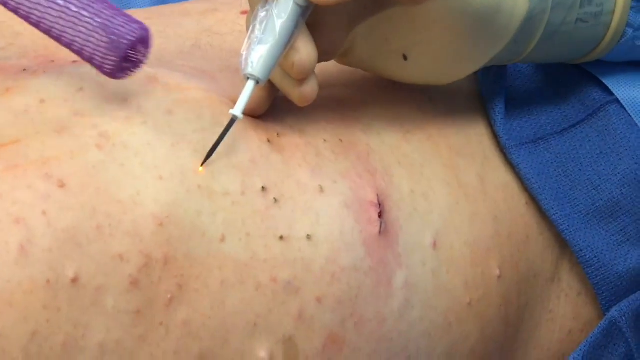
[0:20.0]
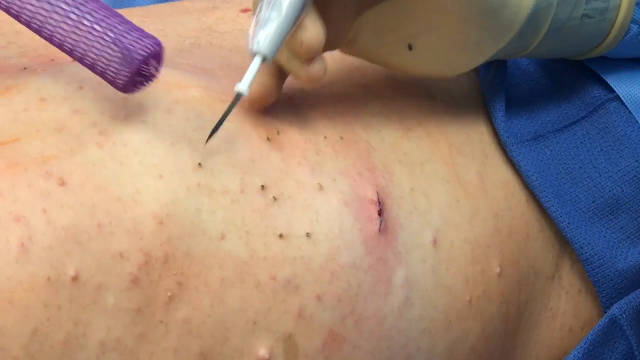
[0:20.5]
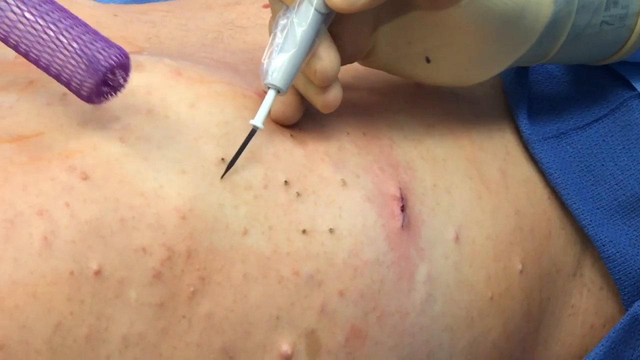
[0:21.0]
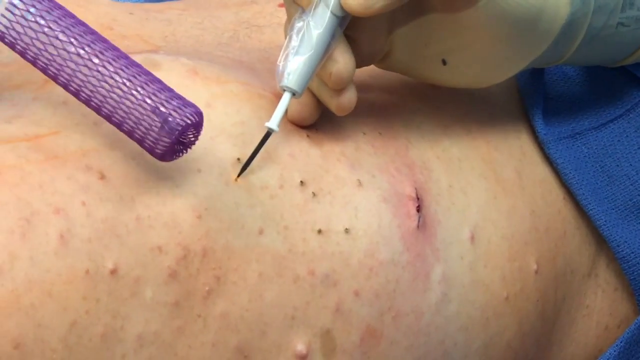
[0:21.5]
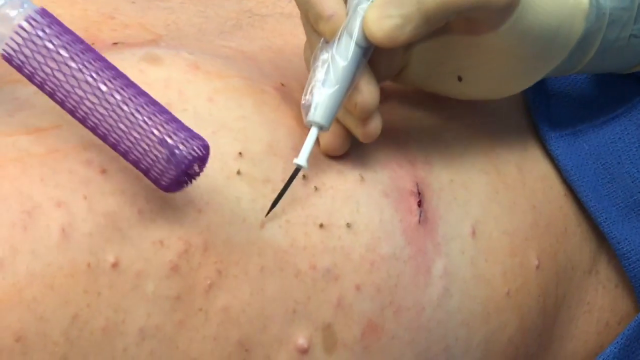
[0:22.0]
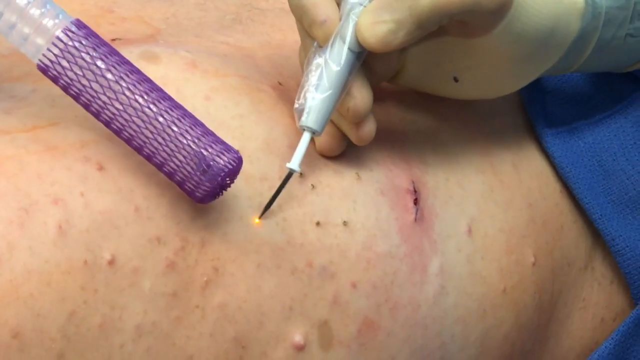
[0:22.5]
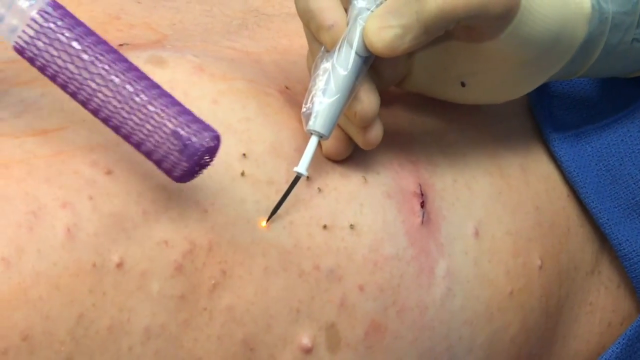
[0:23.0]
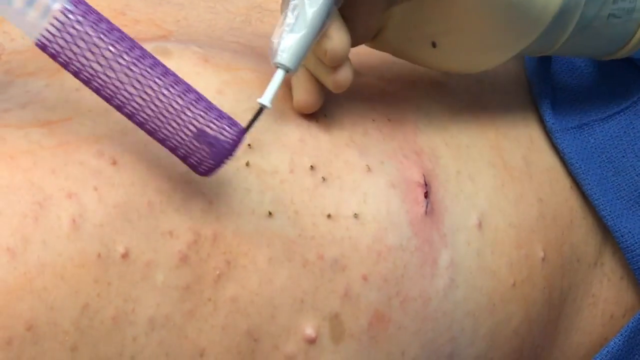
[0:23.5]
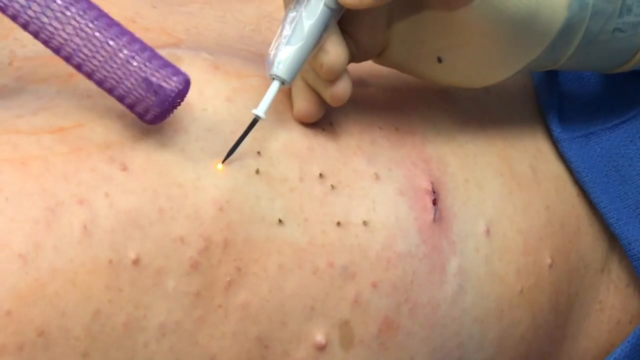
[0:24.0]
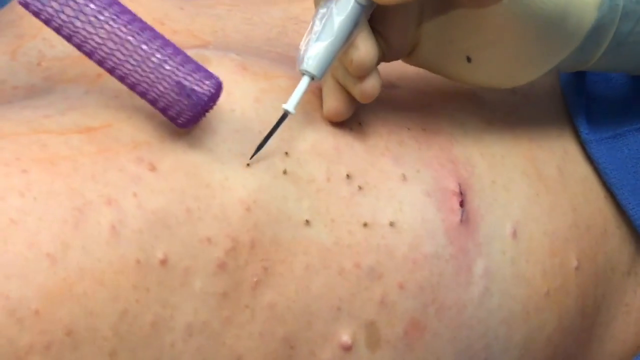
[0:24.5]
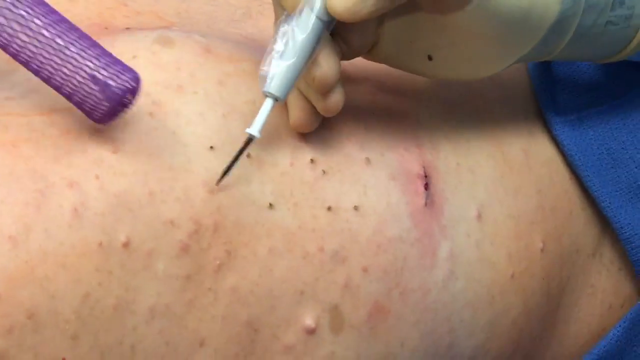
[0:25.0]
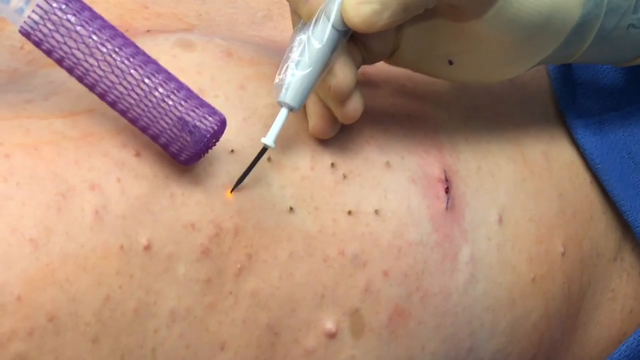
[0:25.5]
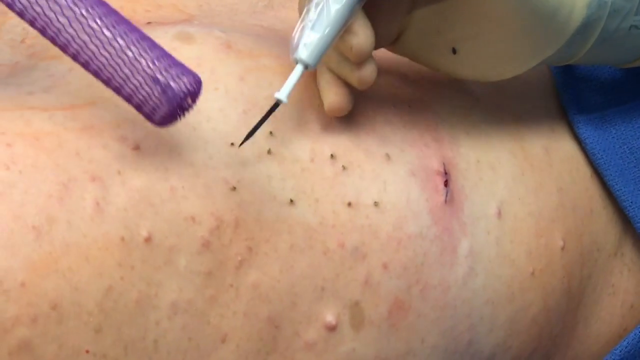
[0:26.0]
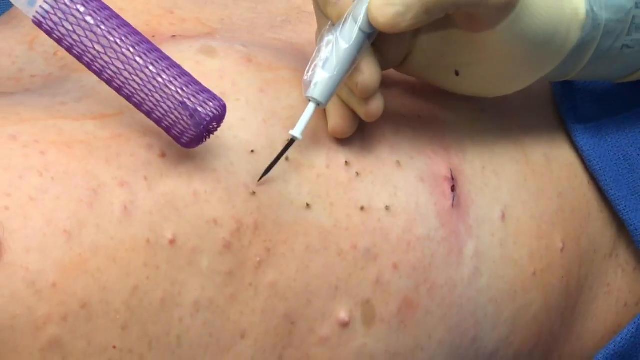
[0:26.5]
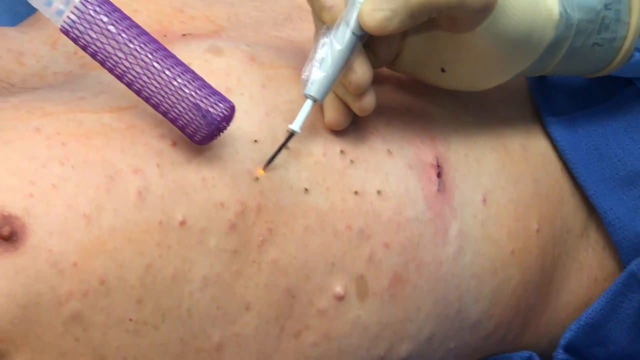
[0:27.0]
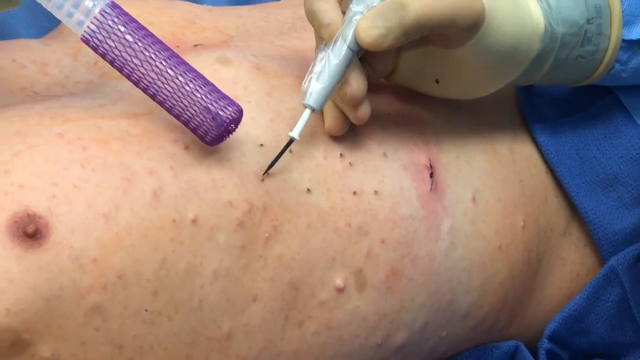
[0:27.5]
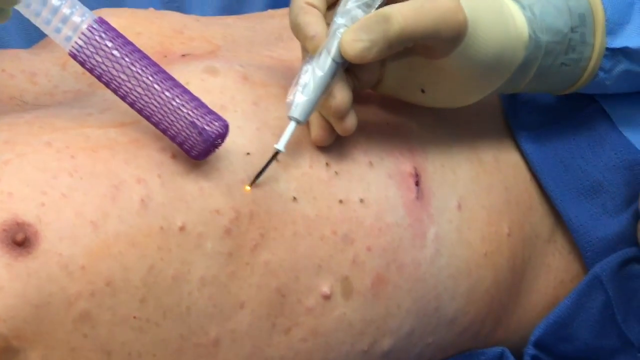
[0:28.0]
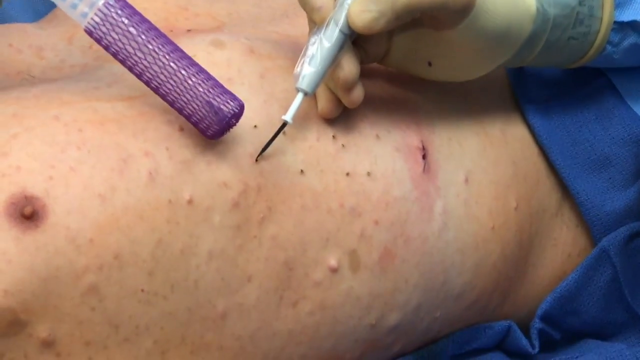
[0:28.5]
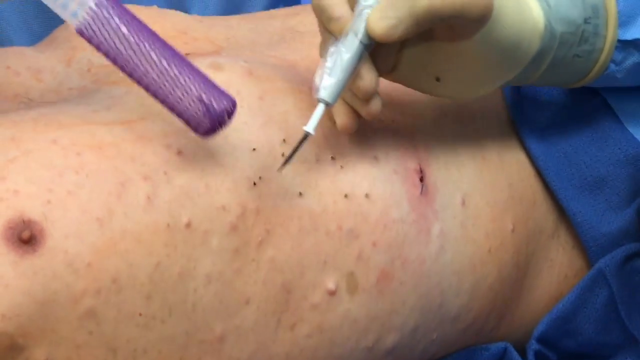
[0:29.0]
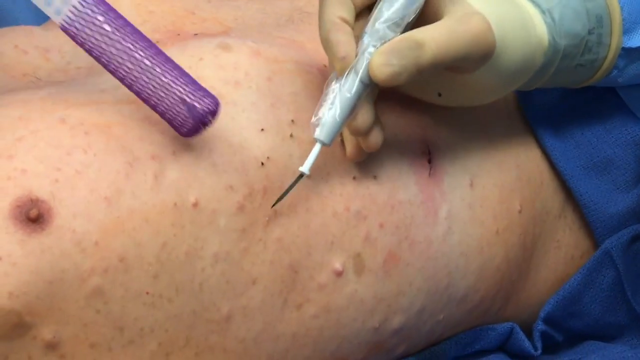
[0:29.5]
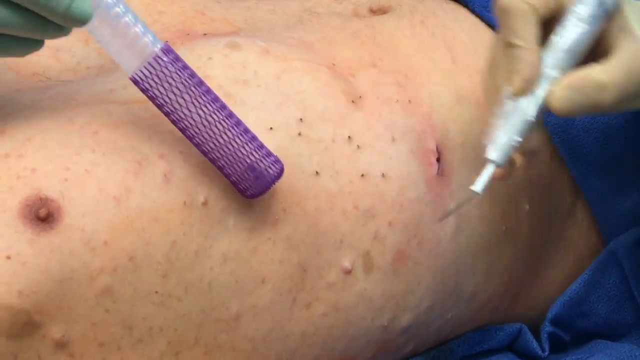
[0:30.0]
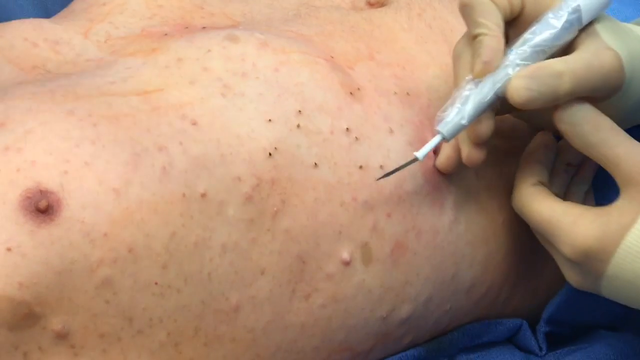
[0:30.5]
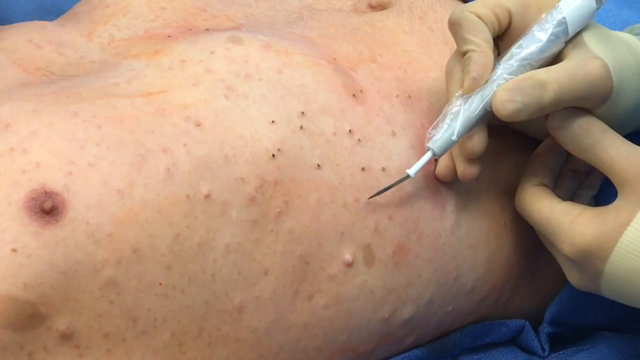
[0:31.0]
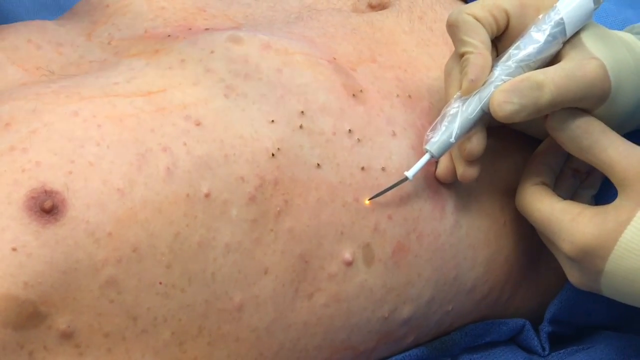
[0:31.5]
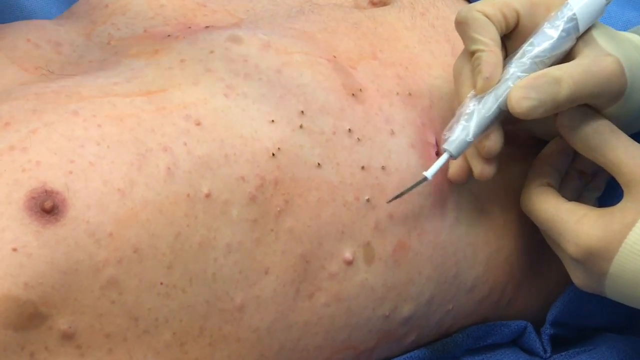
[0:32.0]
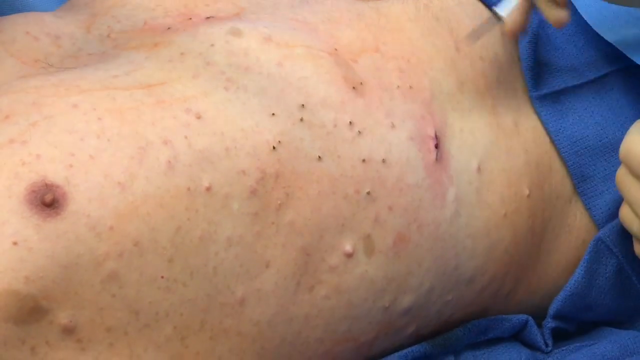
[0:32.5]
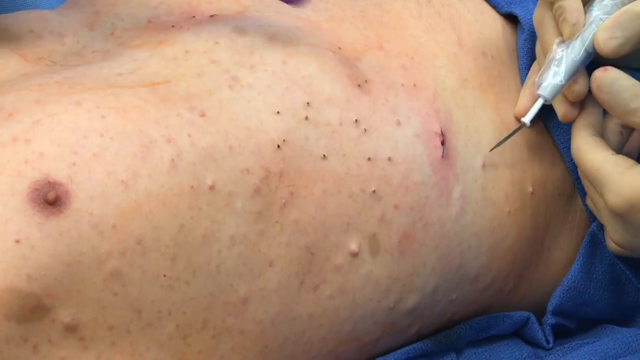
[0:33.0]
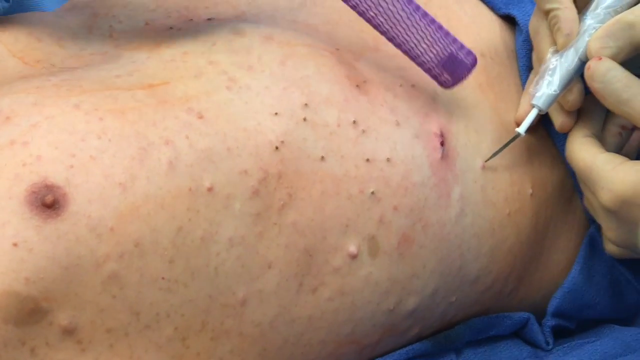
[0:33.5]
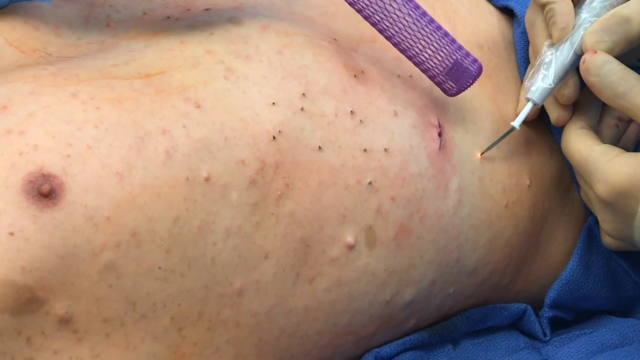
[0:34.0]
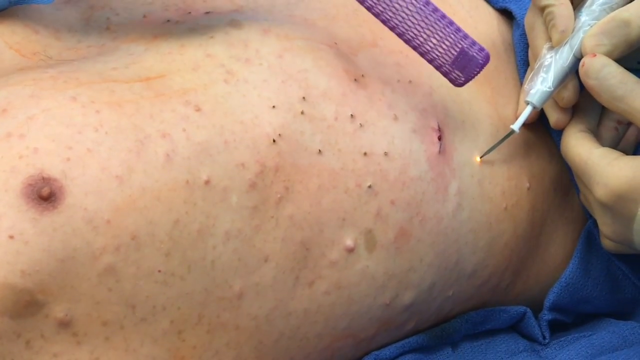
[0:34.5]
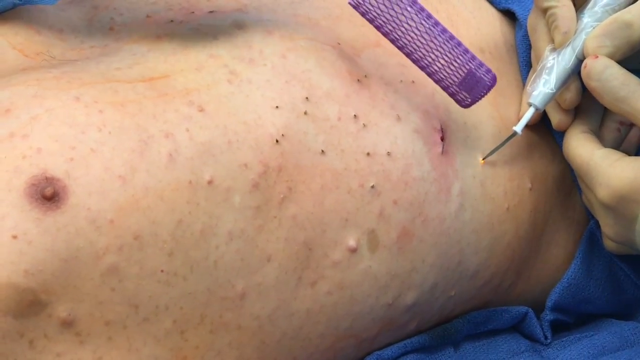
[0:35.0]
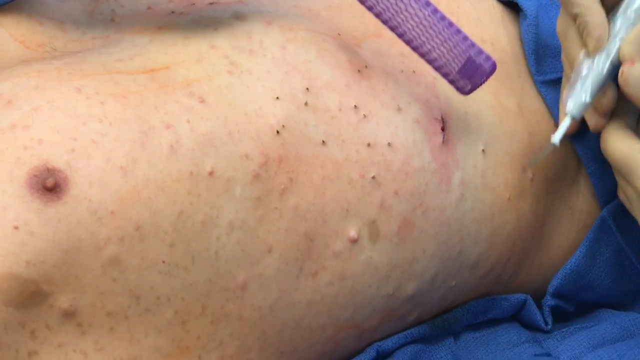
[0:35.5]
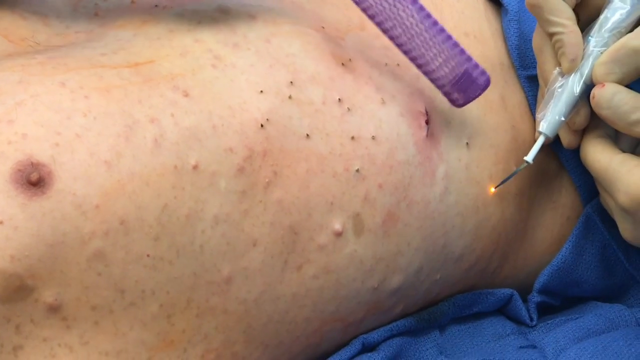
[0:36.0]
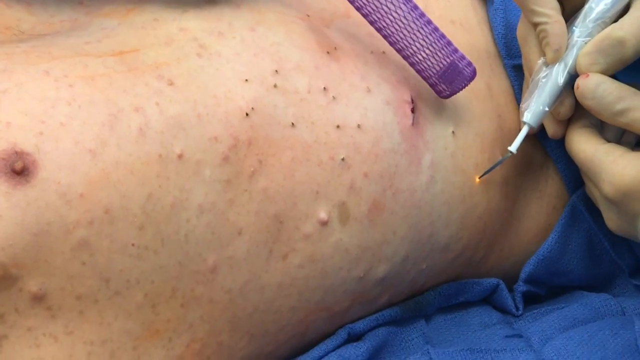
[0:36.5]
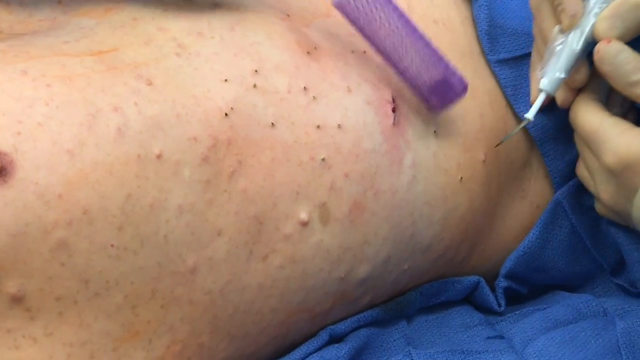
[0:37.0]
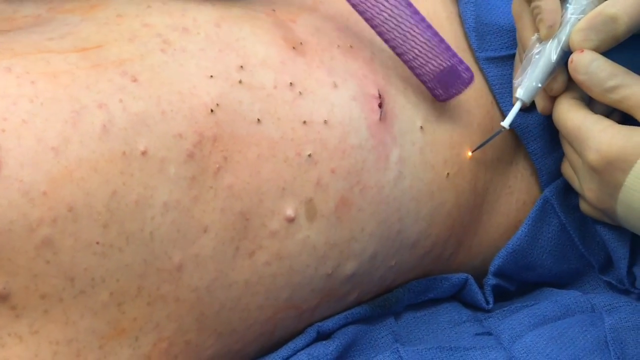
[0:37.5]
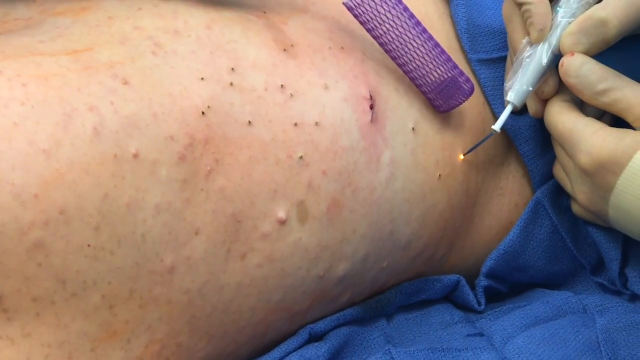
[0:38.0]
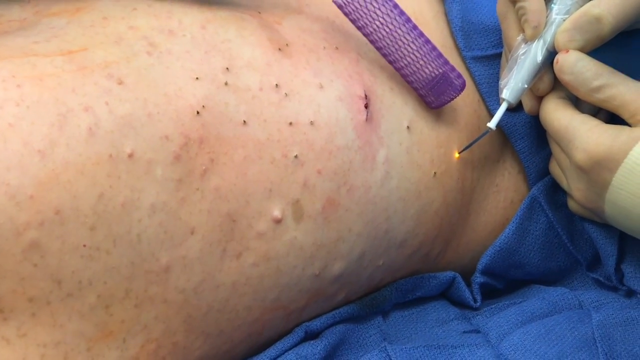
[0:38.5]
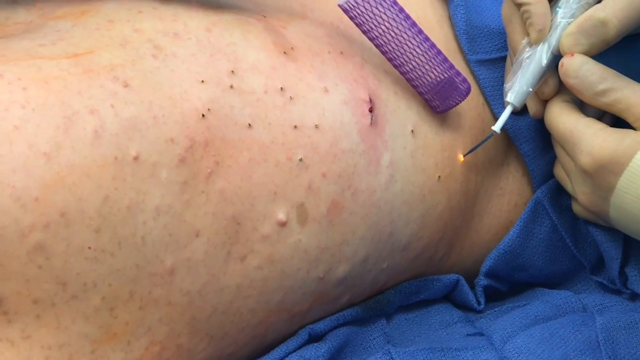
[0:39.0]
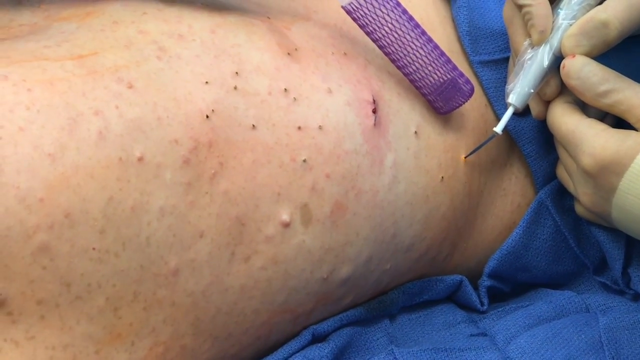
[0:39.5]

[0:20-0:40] The dermatologist and the assistant move across the patient's lower right rib cage and upper right abdomen, burning each individual neurofibroma with the tool, either vacuuming or blowing cold air on the skin as they go and touching each spot one by one within a small cluster on the patient's right side. The doctor wears a blue surgical gown and white nitrile gloves pulled up over the gown's sleeve; the doctor's right hand and part of the right arm are visible. The laser tool is mostly covered in clear plastic and is light gray, with an interchangeable plug-in tip that has a white plastic base and a long, silver, needle-like point. It emits a small laser at the tip as it touches each spot, burning the fibromas out and leaving a tiny black spot at each one. The assistant holds a tubular device with purple mesh over it that either vacuums or blows air to keep the skin cool. The patient, who appears to be unconscious, is covered over the lower half of the body and the face with blue surgical blankets. The patient is a Caucasian male of undeterminable age, with many visible neurofibromas on his right side and chest, mostly on the far right. The doctor takes his time, getting each spot one by one. There is also a minor cut or scratch on the center of the patient's side abdomen that is a bit red around it and looks mildly irritated.